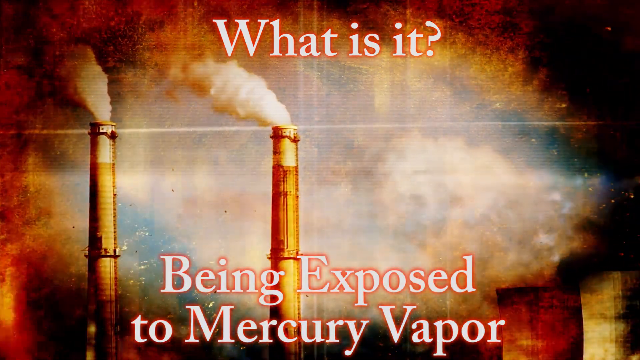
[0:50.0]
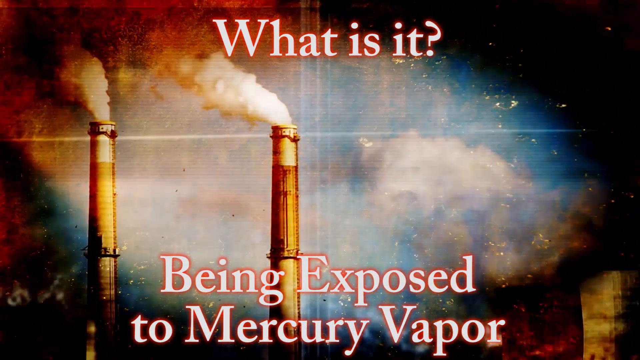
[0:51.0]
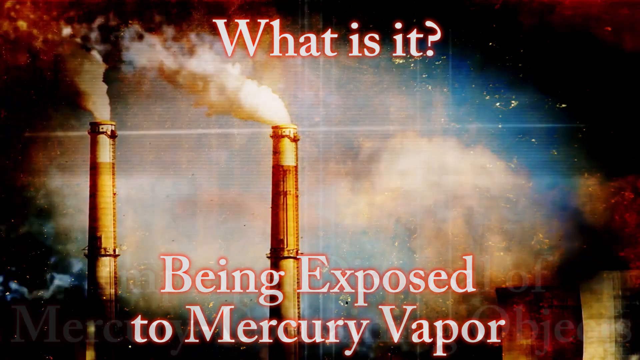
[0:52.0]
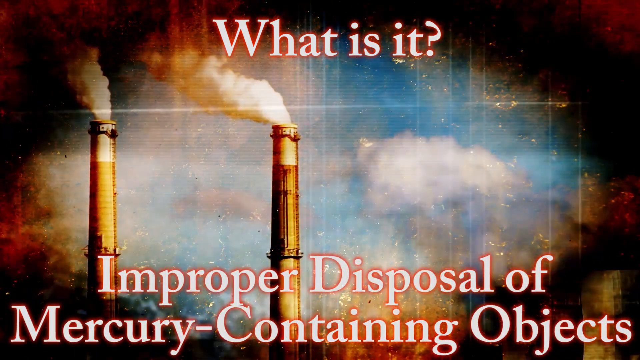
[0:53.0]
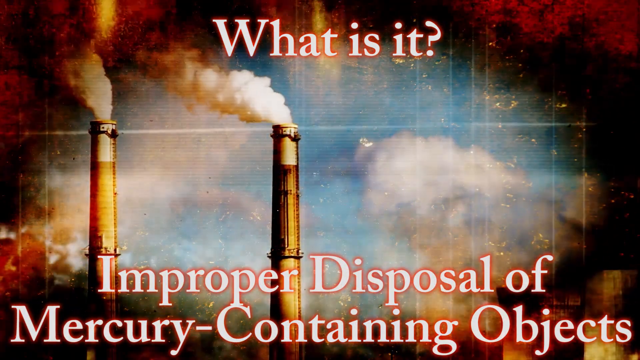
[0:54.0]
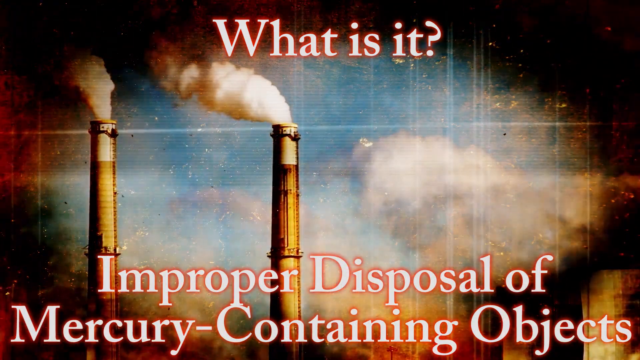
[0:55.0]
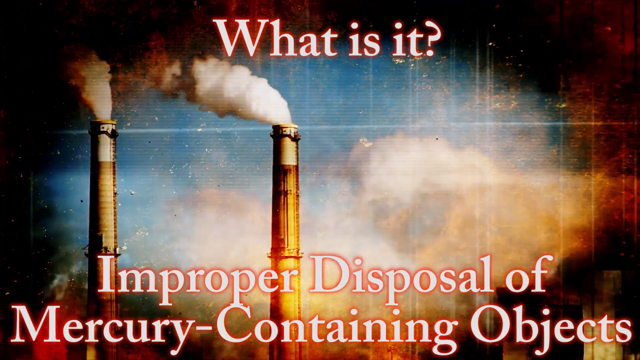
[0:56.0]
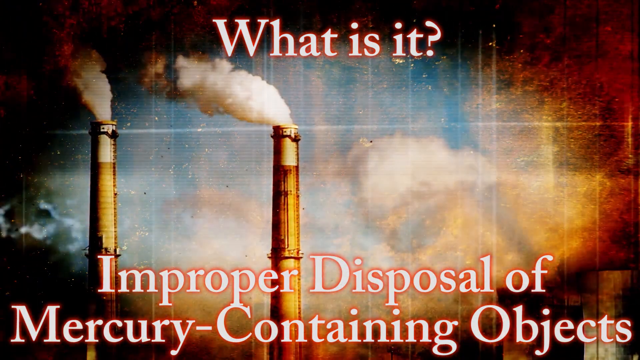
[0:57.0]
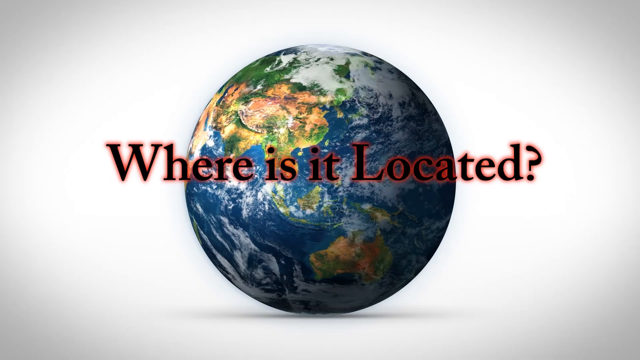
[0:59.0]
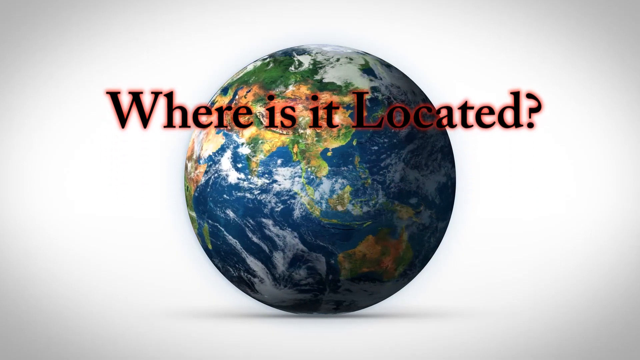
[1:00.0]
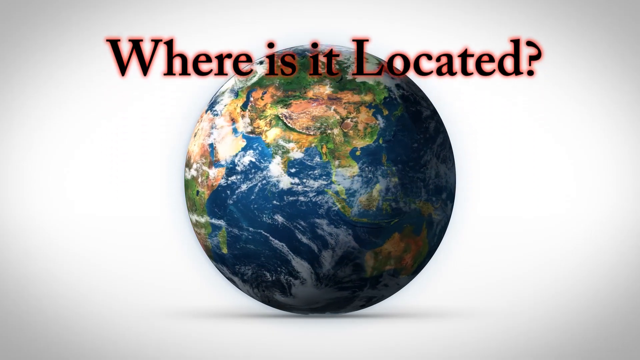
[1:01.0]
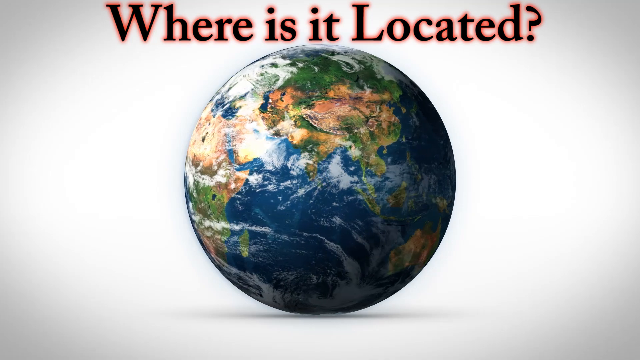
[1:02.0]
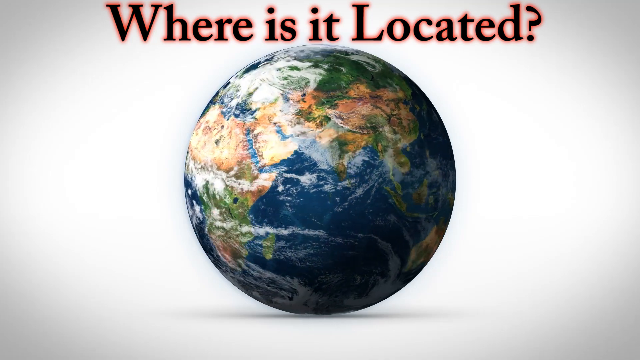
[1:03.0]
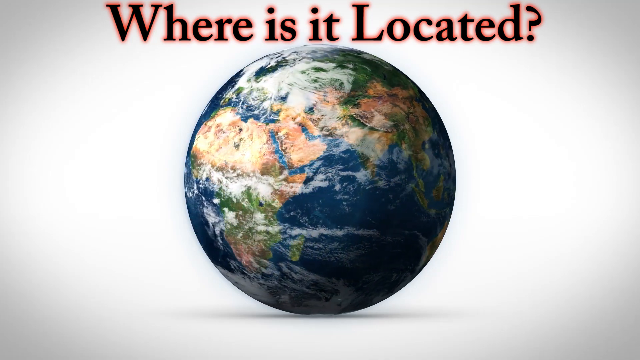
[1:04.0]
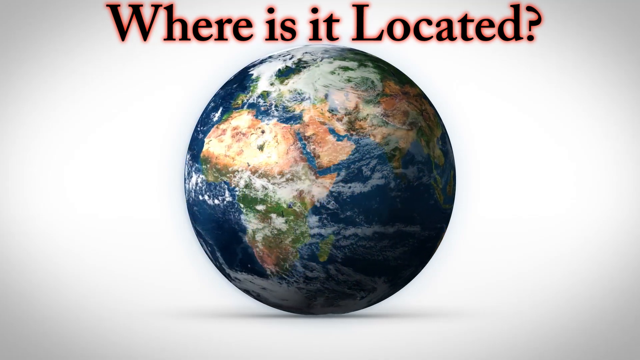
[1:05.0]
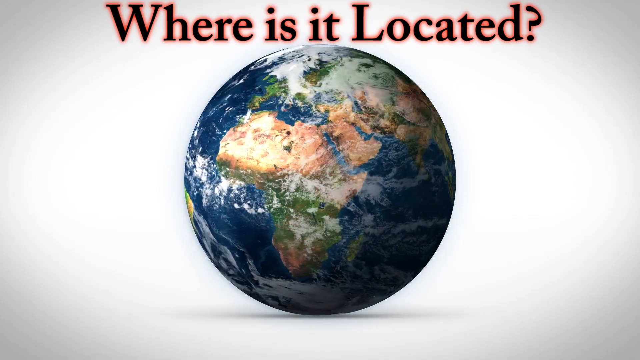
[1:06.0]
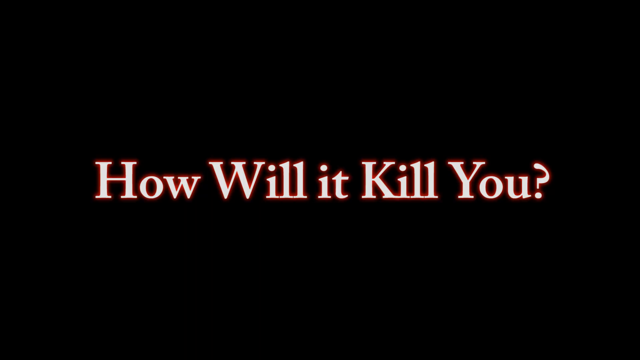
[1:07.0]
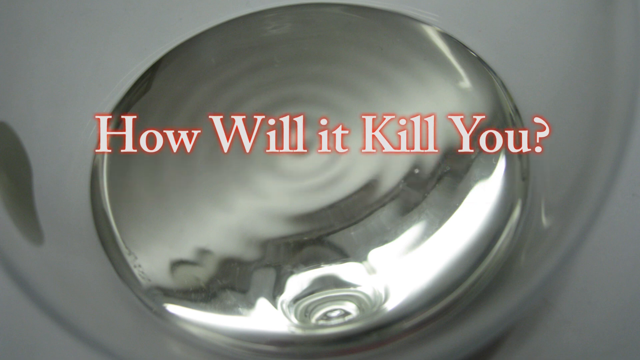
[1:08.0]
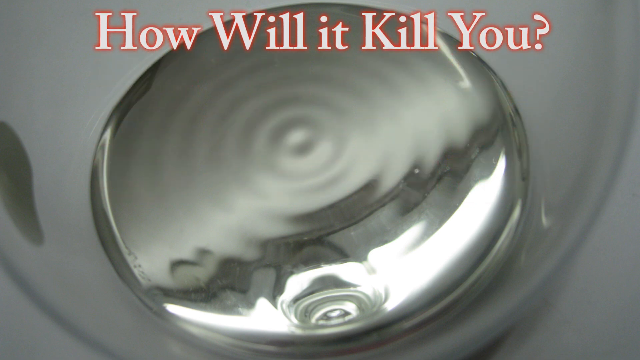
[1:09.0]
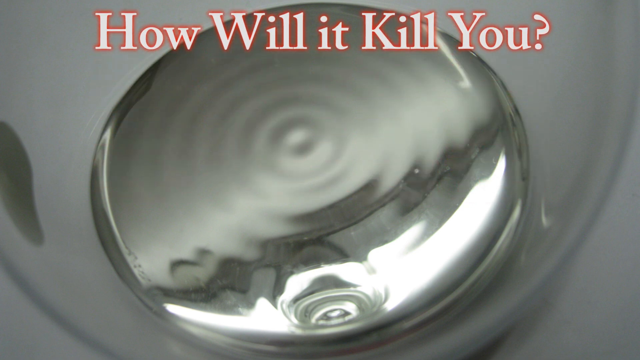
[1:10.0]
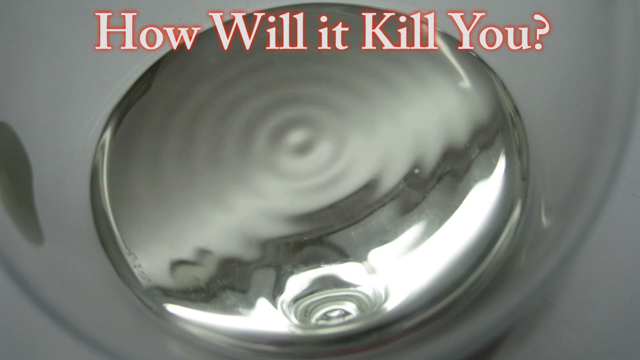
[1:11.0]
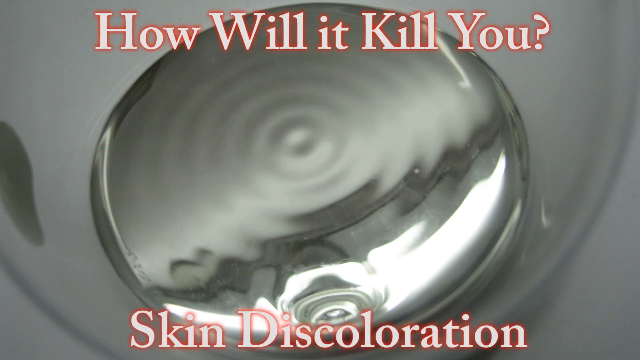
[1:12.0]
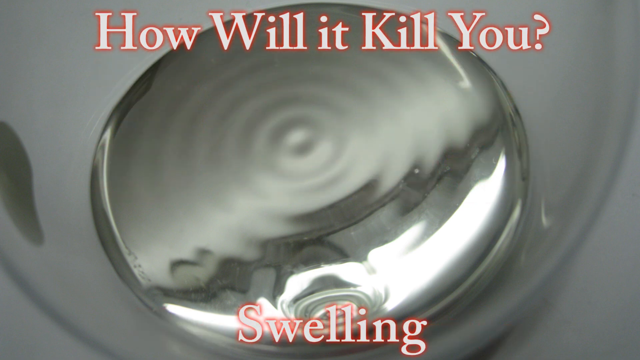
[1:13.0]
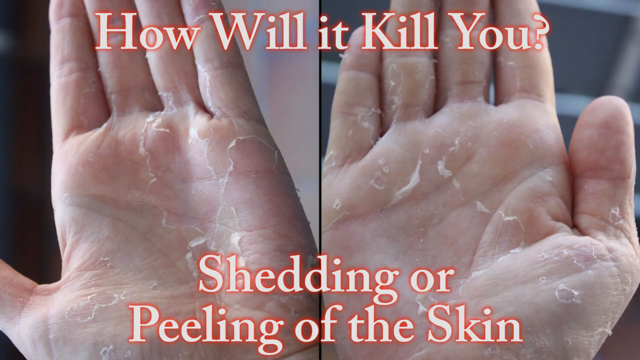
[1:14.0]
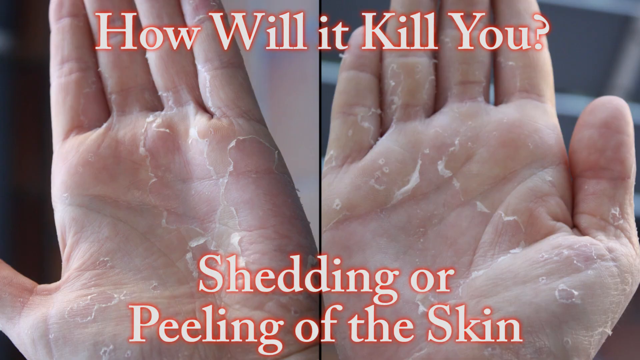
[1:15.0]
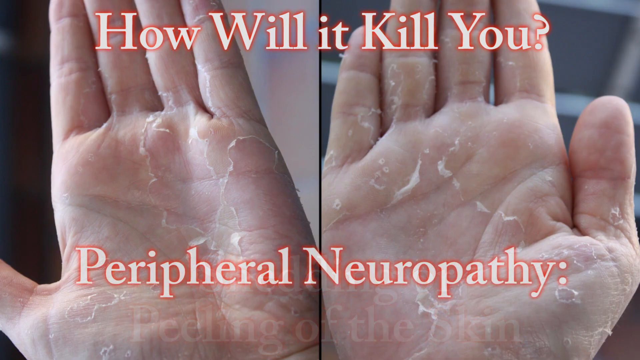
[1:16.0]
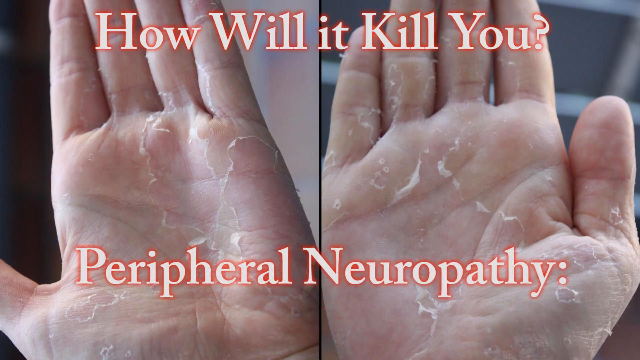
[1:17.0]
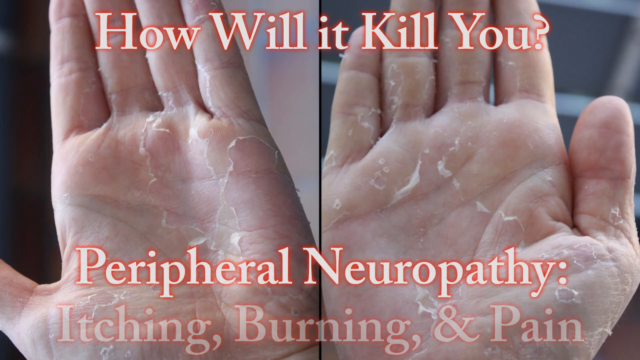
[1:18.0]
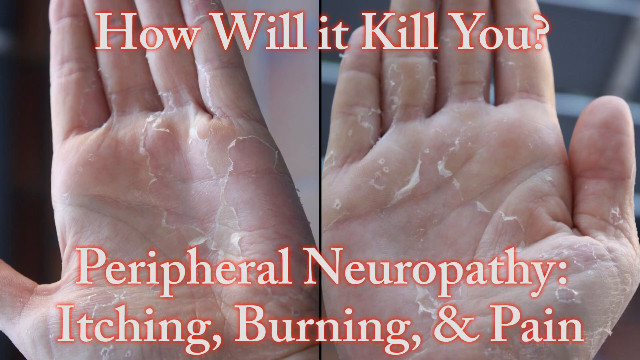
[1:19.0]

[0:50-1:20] The video deals with the effects of mercury on people, stating that eating fish every day exposes people to mercury poisoning. It asks what mercury exposure is, naming exposure to mercury vapour, and states that improper disposal of mercury-containing objects can also lead to exposure. It then asks where mercury is located and how mercury will kill you, listing peeling and shedding of the skin, and states that it affects internal organs.